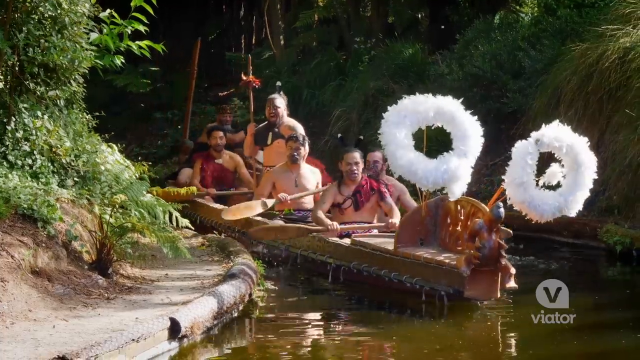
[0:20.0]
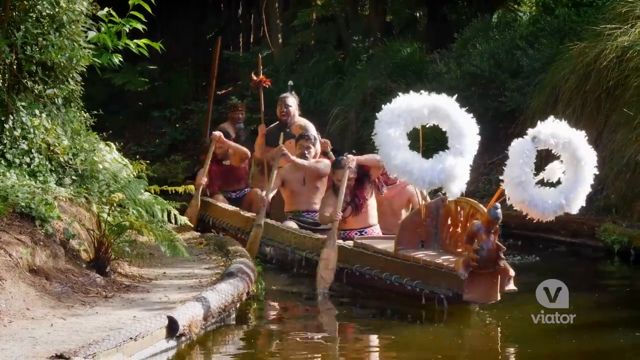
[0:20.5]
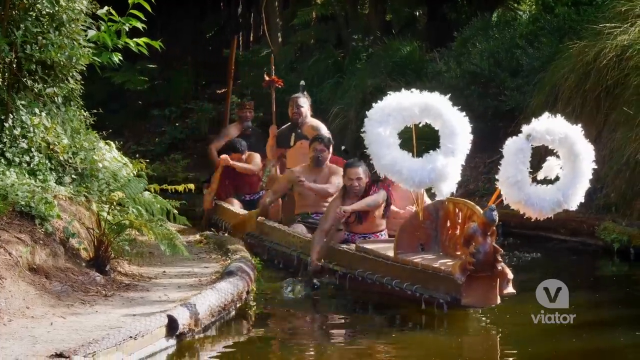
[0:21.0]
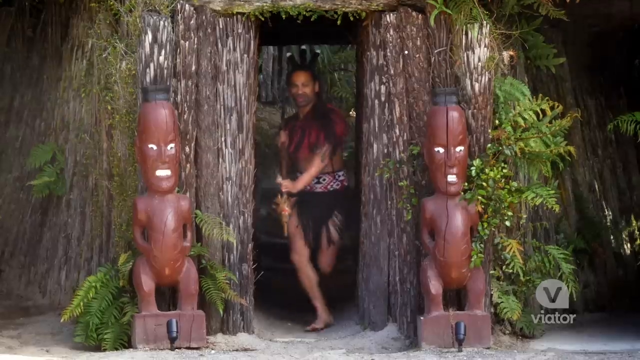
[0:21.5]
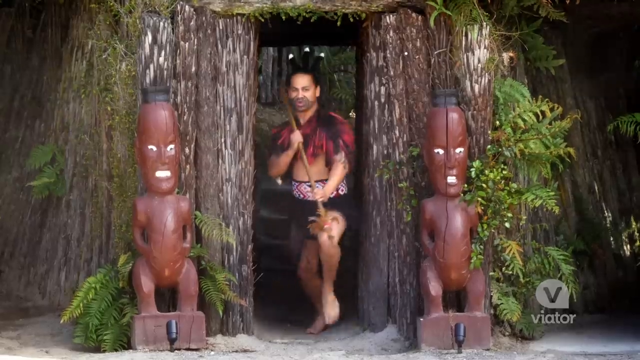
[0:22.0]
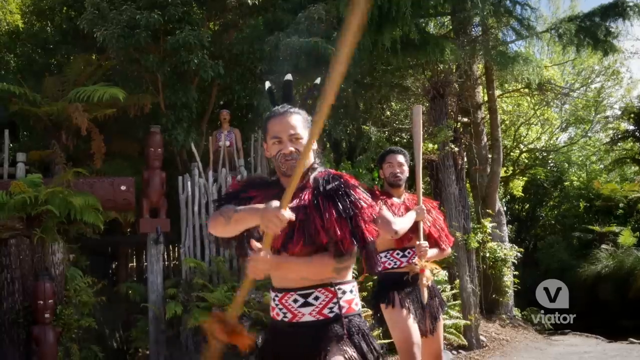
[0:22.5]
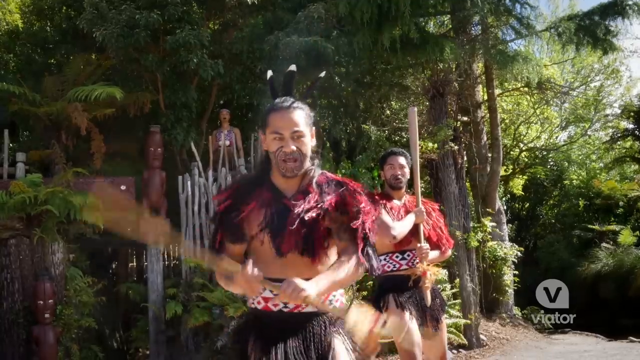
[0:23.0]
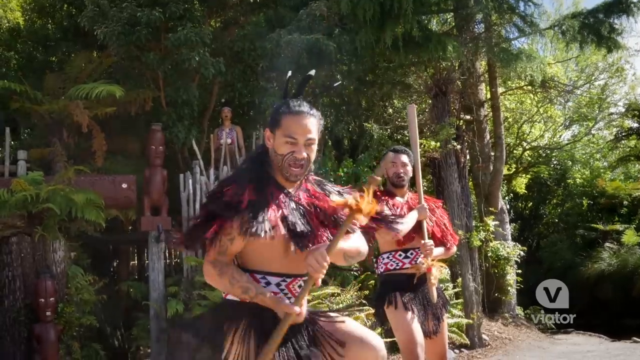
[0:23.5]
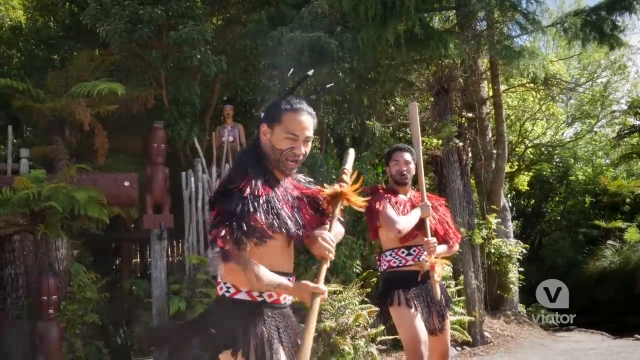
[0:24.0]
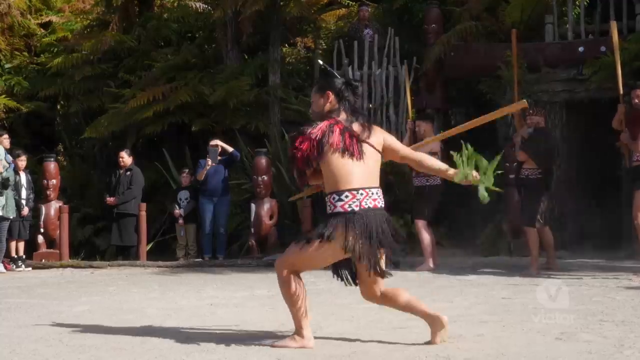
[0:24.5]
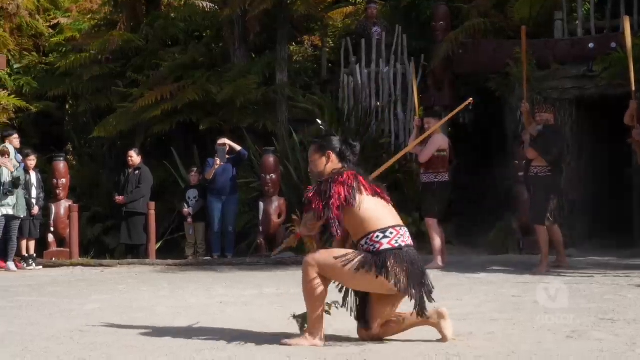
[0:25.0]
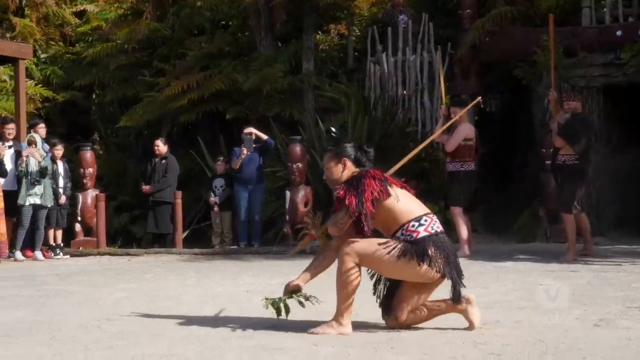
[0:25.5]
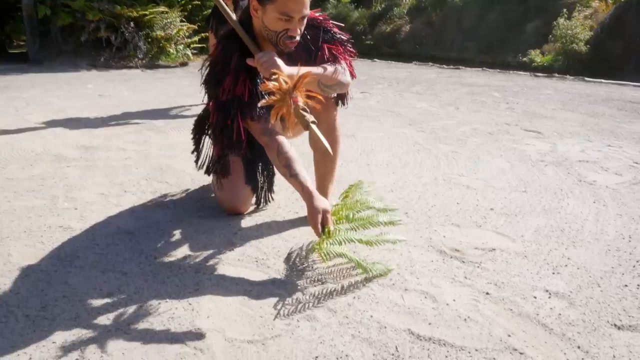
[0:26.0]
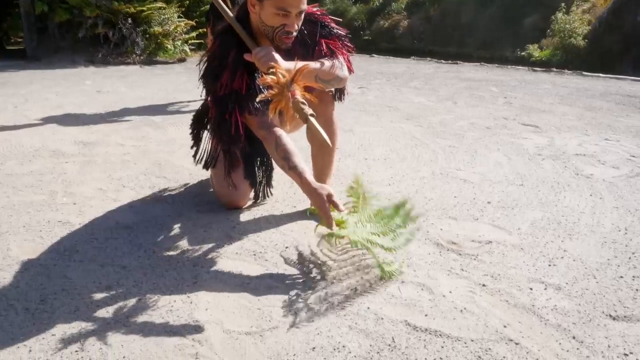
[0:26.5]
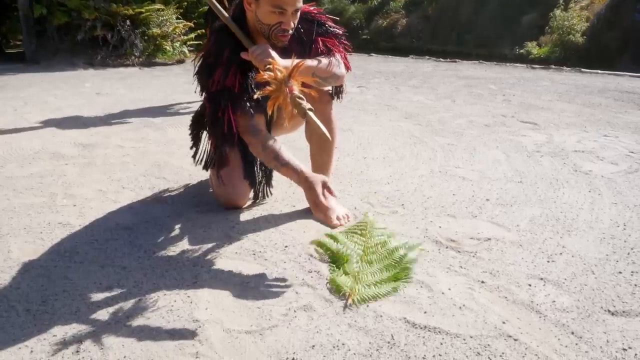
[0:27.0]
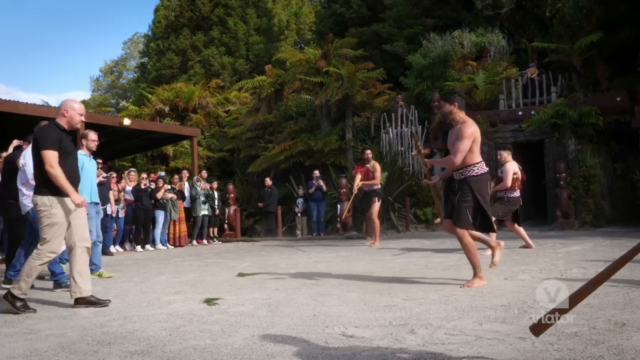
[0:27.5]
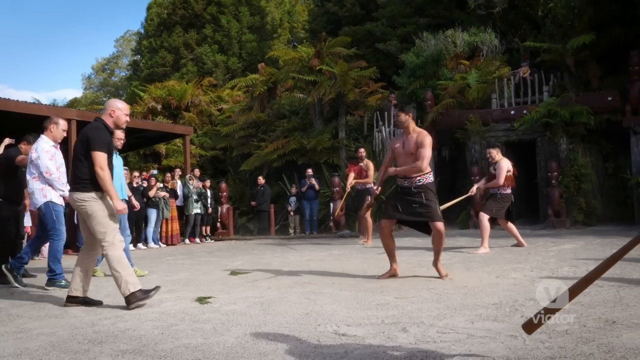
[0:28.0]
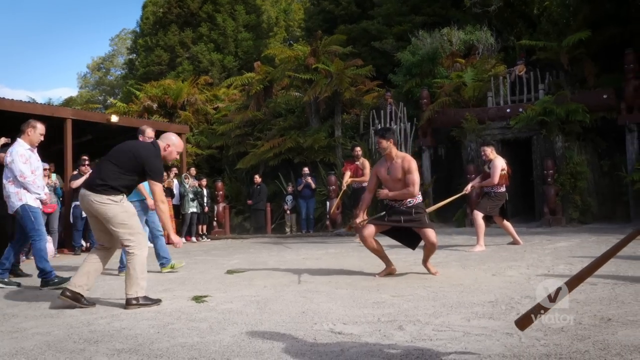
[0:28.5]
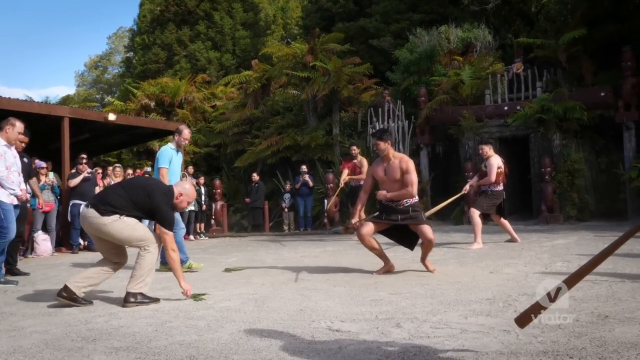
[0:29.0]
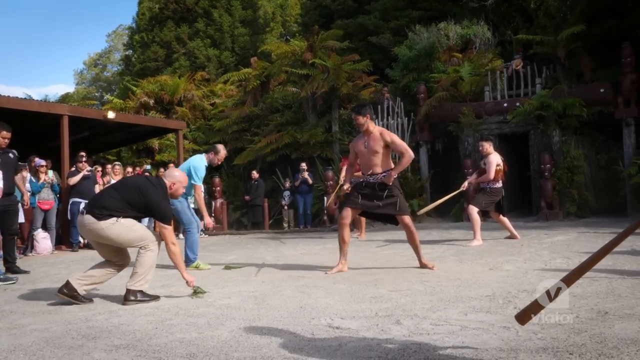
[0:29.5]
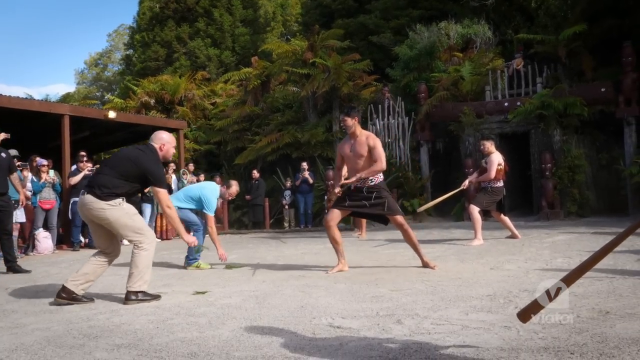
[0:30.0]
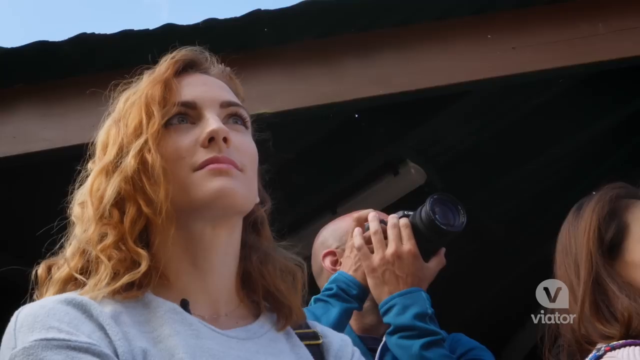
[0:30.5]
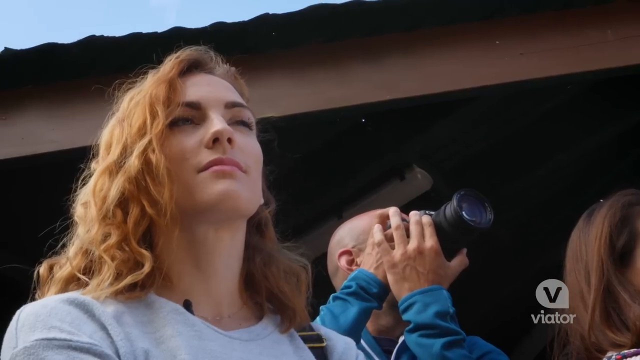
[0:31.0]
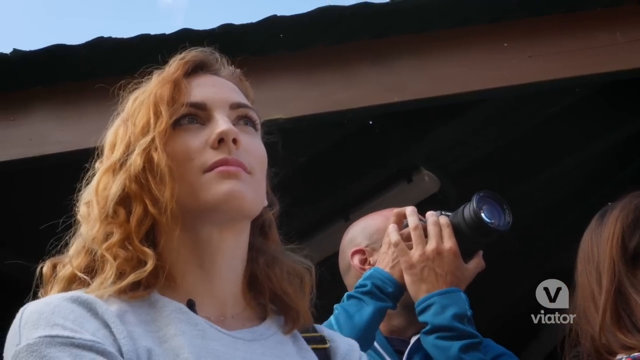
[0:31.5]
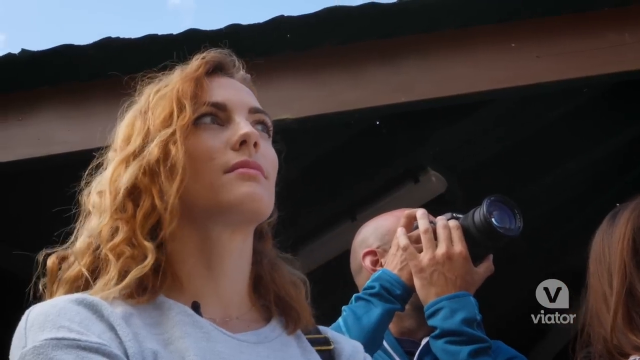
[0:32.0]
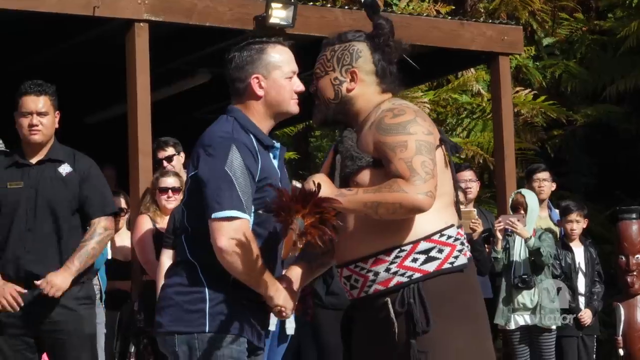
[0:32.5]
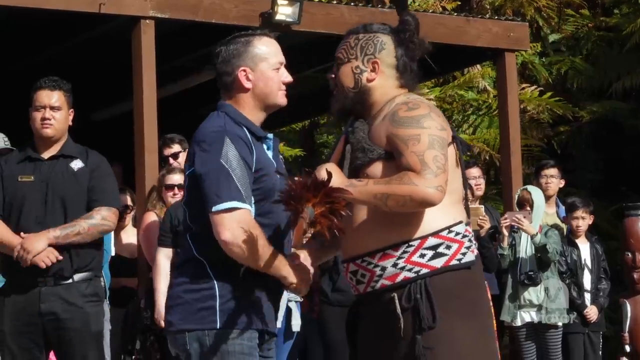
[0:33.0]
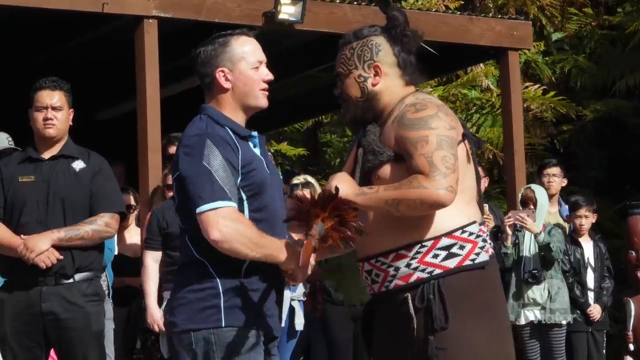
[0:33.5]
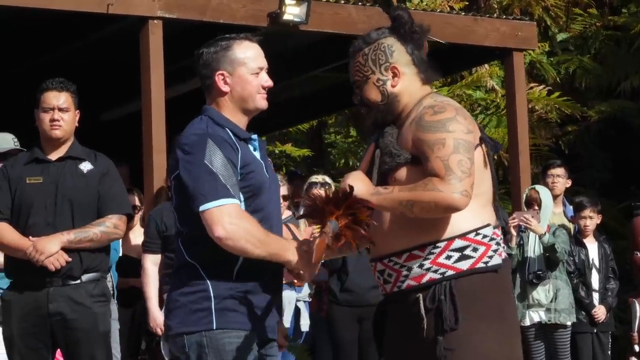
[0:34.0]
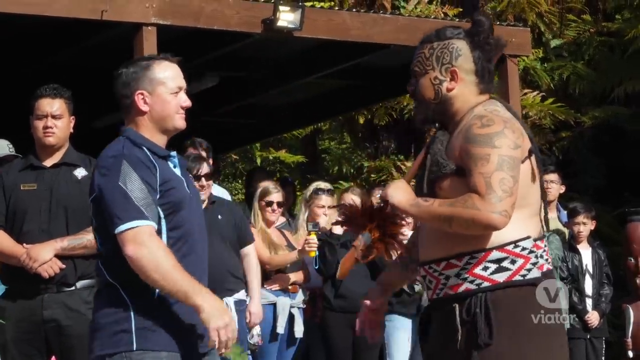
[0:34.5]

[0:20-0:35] A native man comes out of a hut holding a stick. He then stands in the center of a dirt area and puts leaves on the dirt, surrounded by people watching in a circle. Two white men go and grab the leaves he has laid down. The native man shakes hands with one of these men and also bumps noses with him, while the woman host stands on the side watching. The natives wear black skirts with tribal-looking belts and some sort of red and black feather-type thing on their shoulders. A man takes photos on the sidelines. The landscape is surrounded by really tall trees and a lot of greenery.